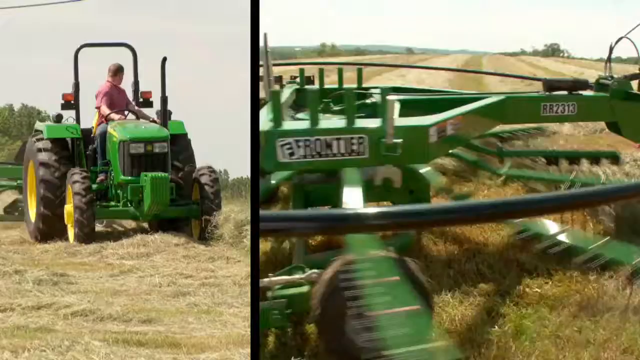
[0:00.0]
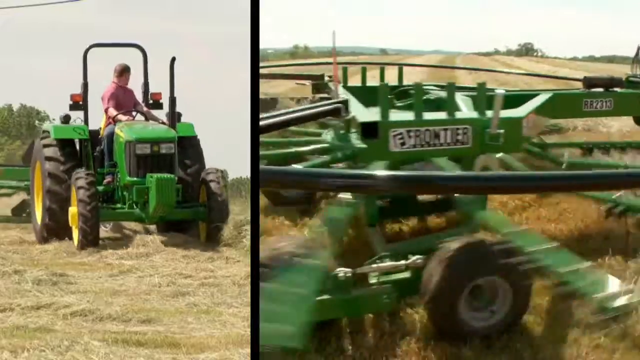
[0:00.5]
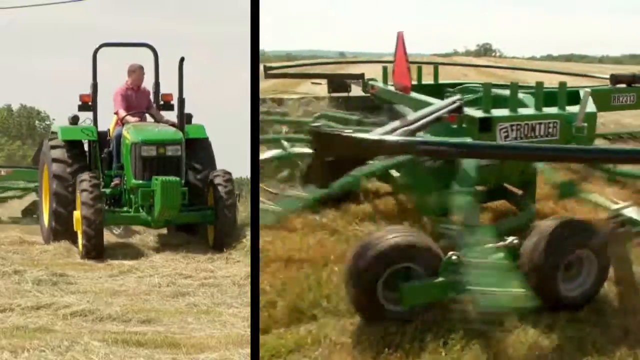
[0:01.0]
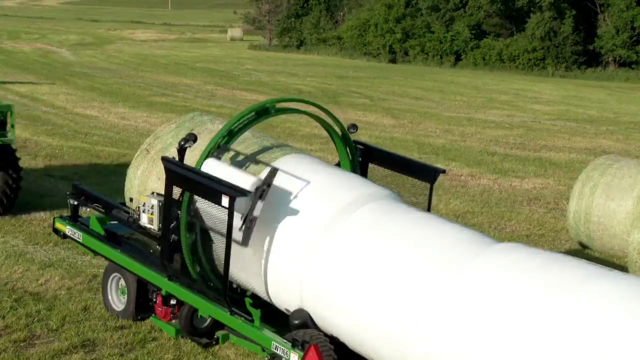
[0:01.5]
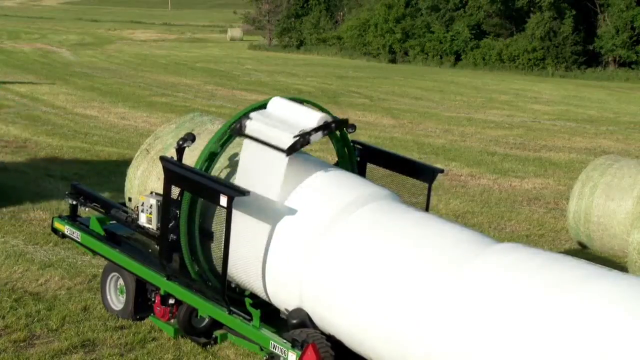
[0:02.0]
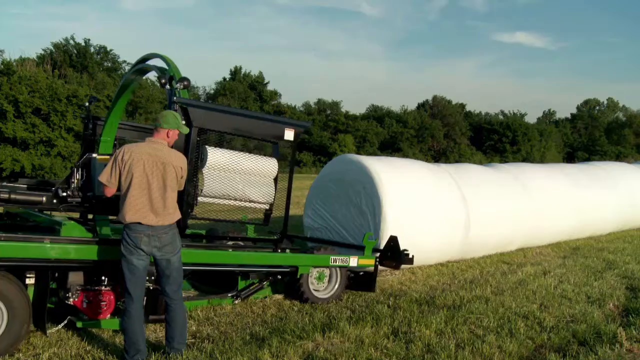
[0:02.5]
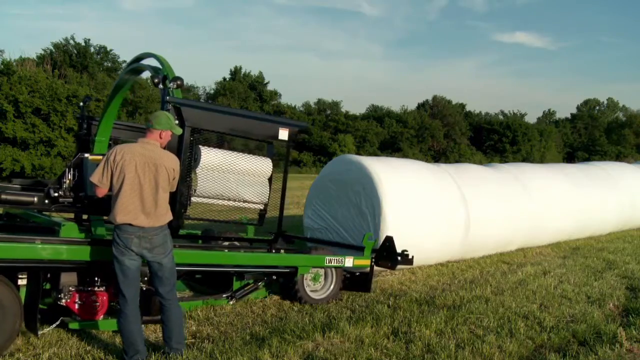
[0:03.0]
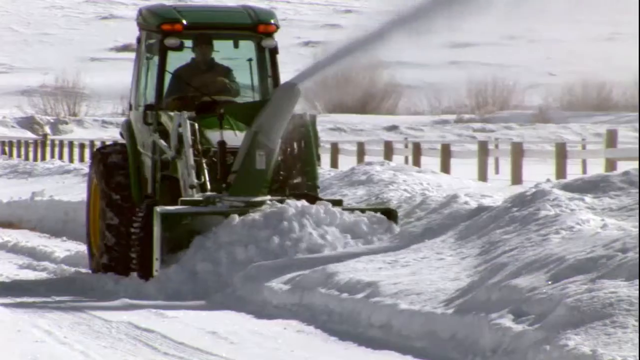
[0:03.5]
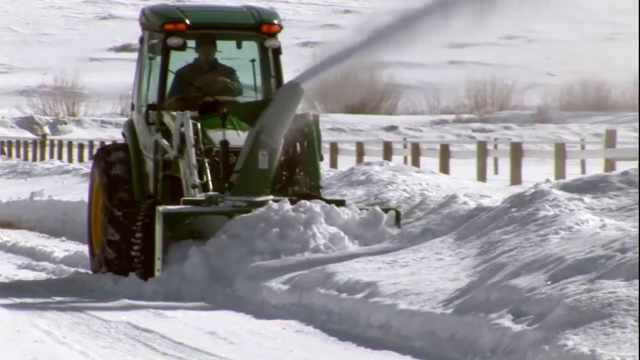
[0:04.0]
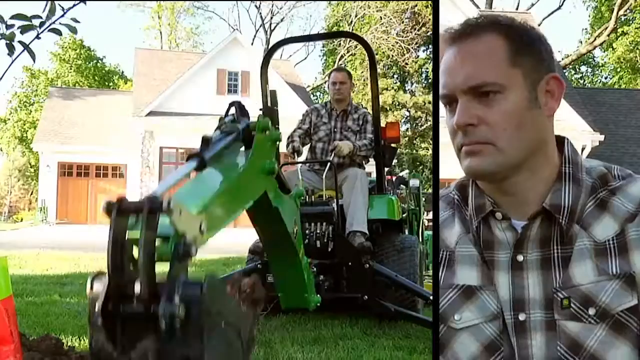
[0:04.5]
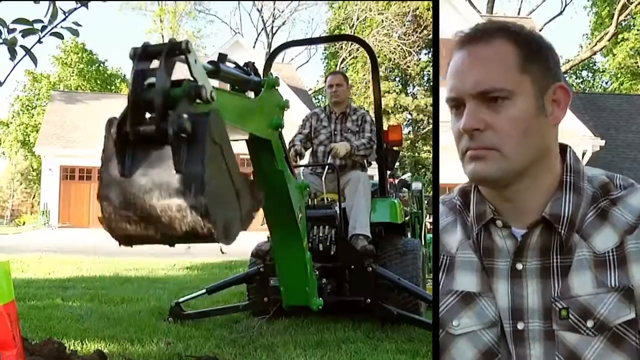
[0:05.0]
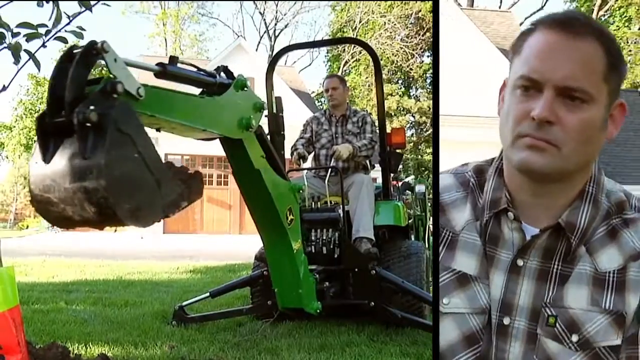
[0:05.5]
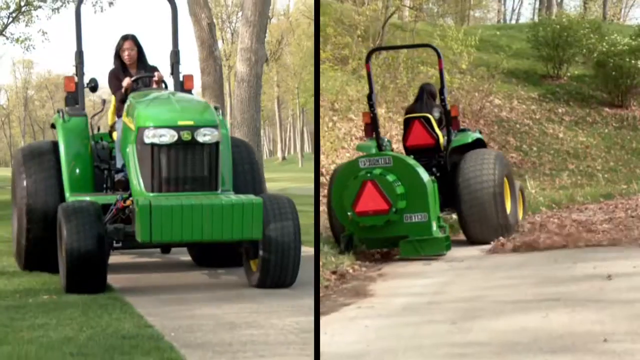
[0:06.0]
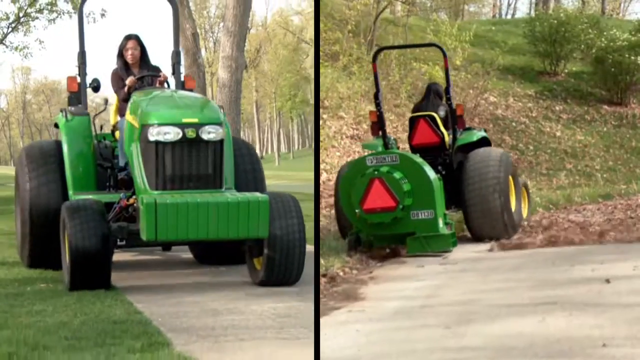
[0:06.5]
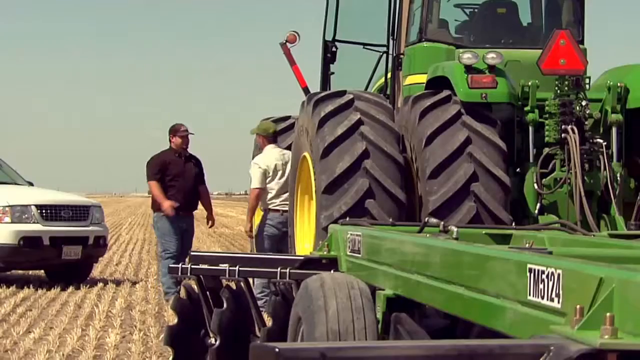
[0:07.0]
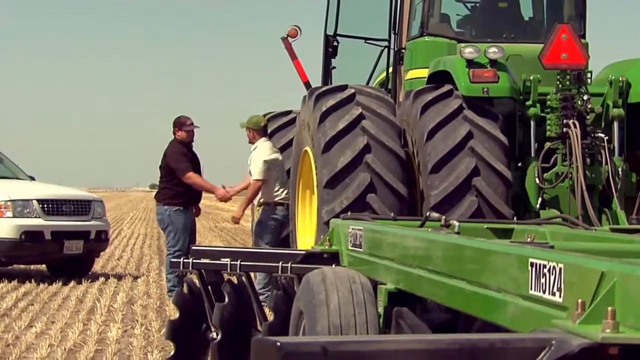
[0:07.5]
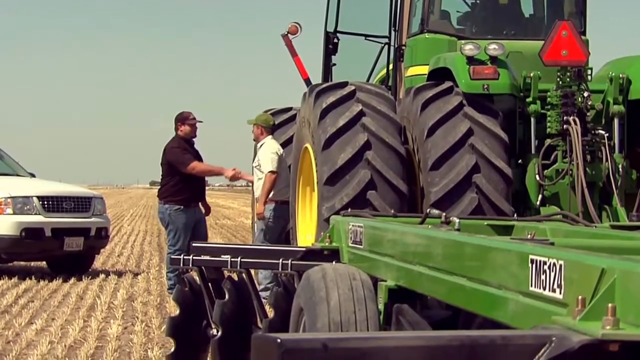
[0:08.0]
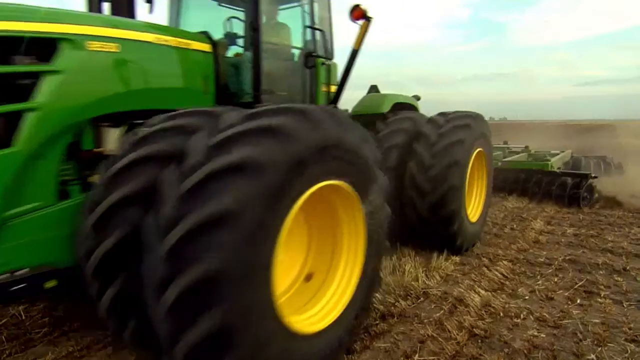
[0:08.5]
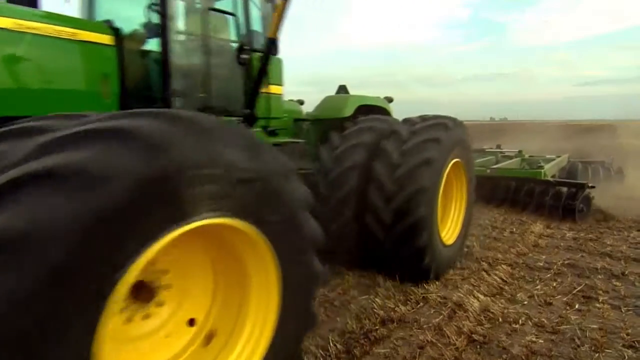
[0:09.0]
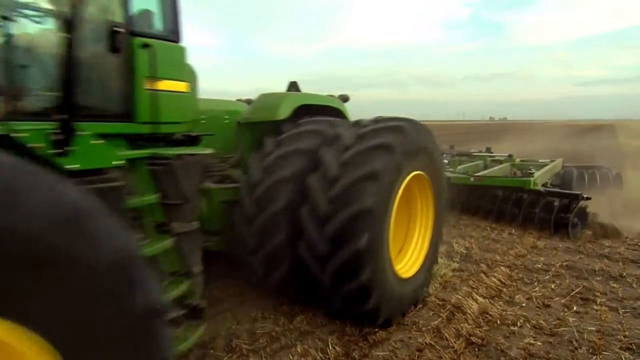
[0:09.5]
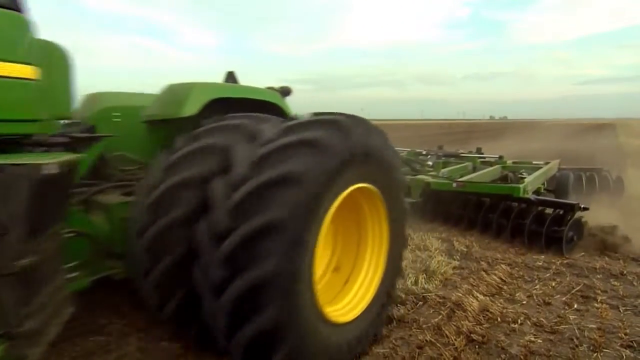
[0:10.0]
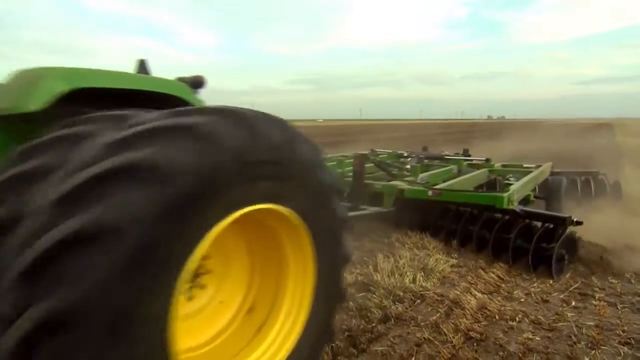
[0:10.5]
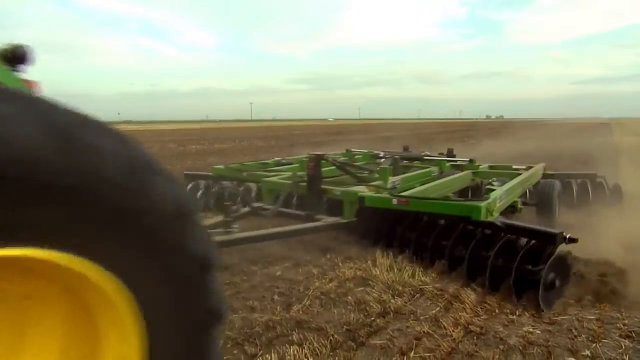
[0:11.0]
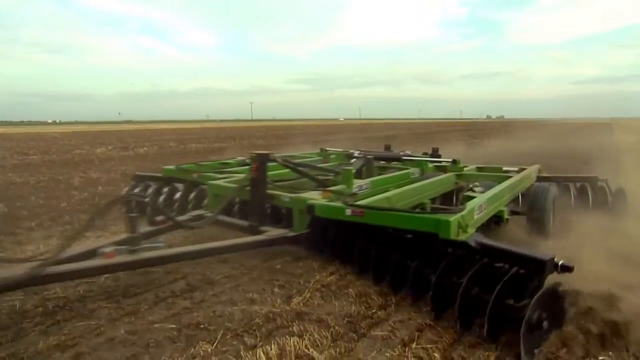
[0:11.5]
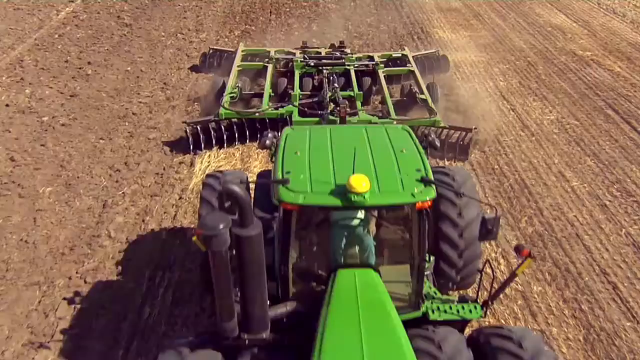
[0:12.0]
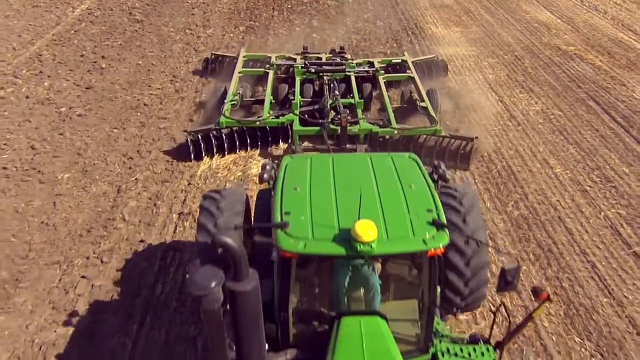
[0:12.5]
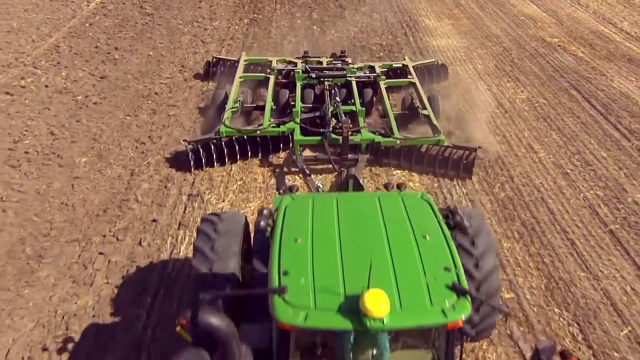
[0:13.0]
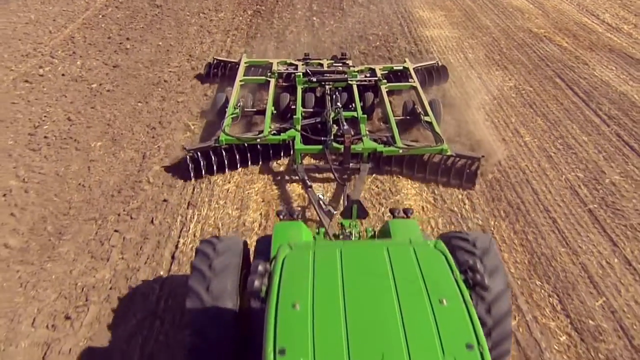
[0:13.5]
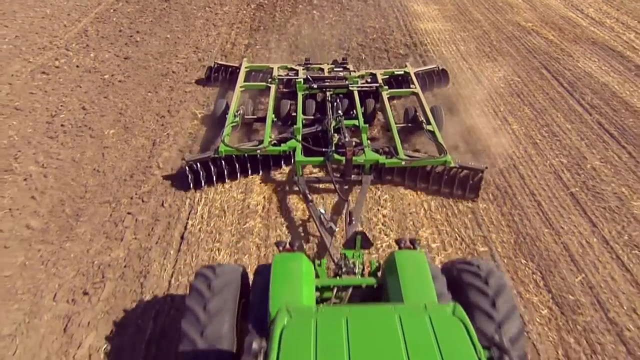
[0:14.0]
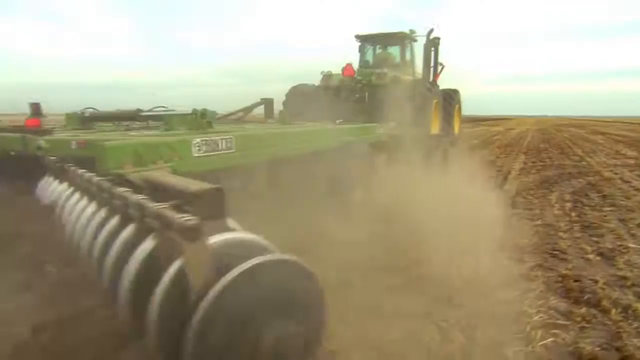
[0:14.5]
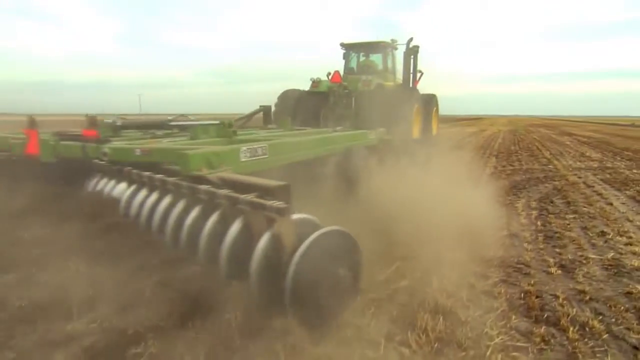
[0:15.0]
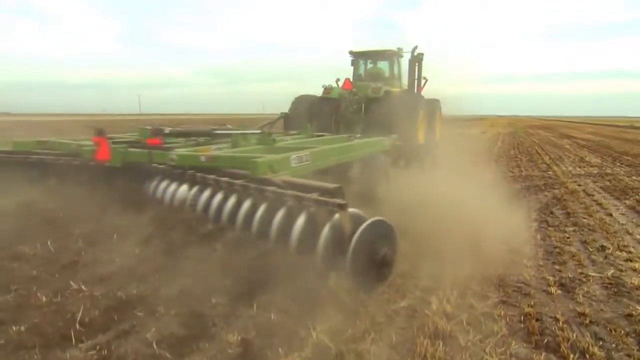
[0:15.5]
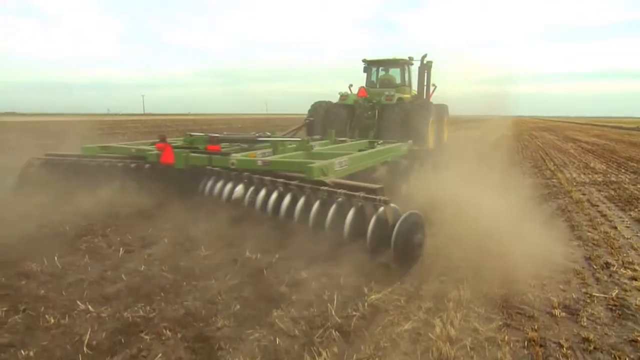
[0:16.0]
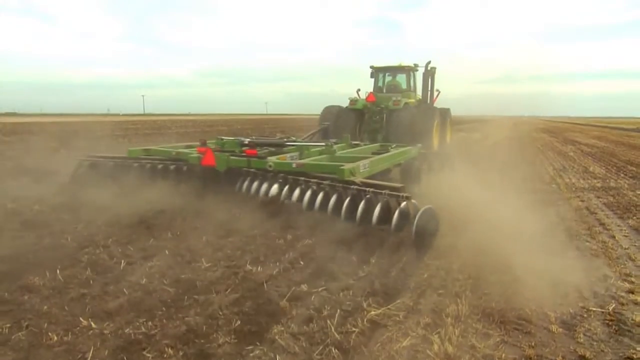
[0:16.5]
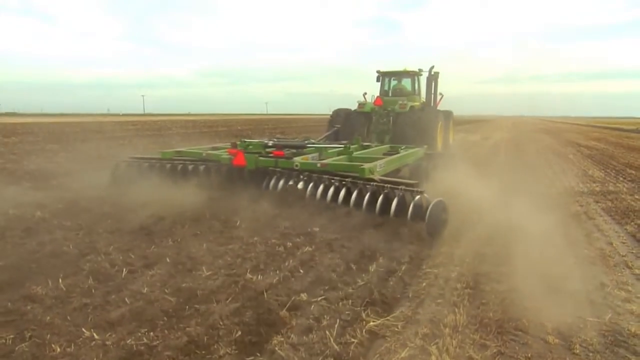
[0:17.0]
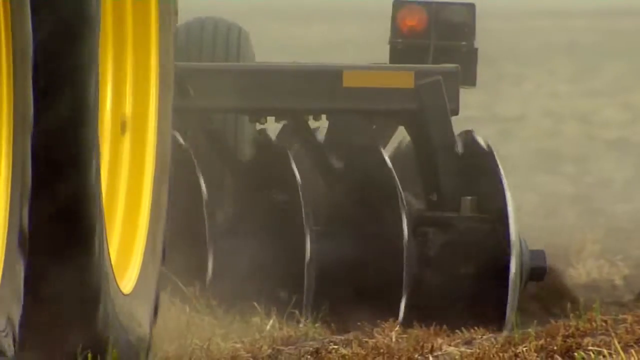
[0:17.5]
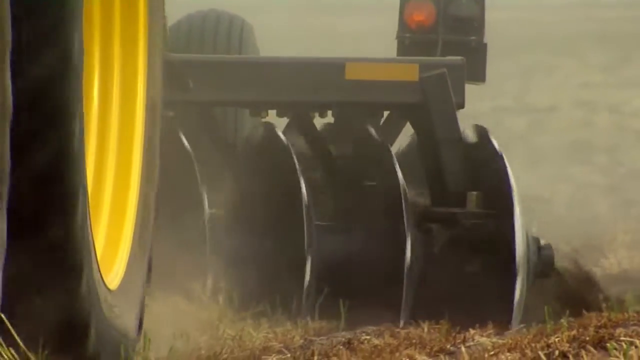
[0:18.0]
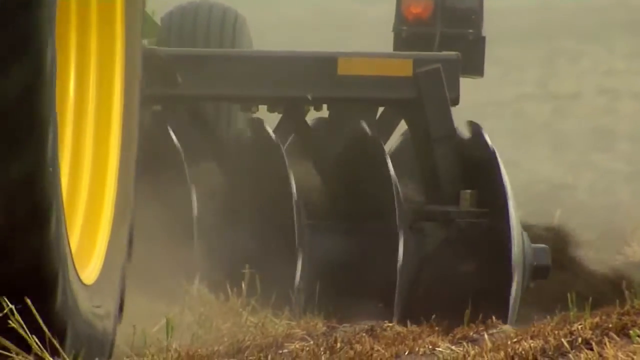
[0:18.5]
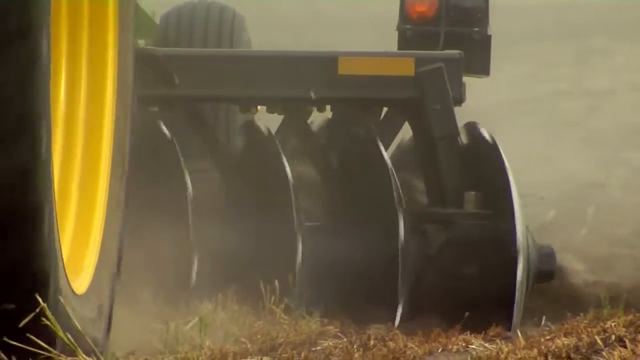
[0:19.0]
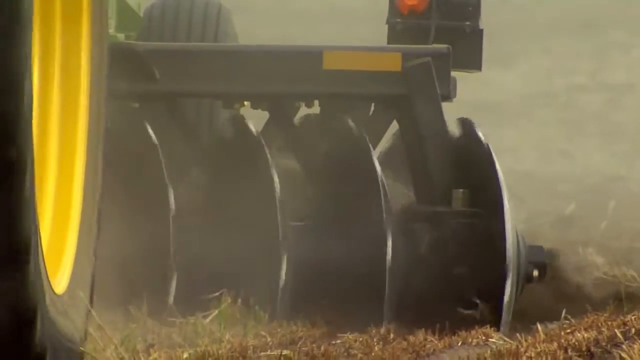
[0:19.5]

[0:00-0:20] Fields appear with various working vehicles and machines. The first is a green tractor with two small wheels on the front and two bigger wheels on the back; a white man drives it through the fields while looking behind. Next to it is a green machine that has wheels, moves on its own, and has some sort of different green blades that spin all the time. A machine then puts a white cloth on top of something in a round fashion. More machines follow, all green, along with some men, one of whom shakes the hand of another, and a woman driving a tractor in a field. Next comes footage of people driving a tractor with a device attached to the back that goes against the ground of the farm and seems to work the ground.